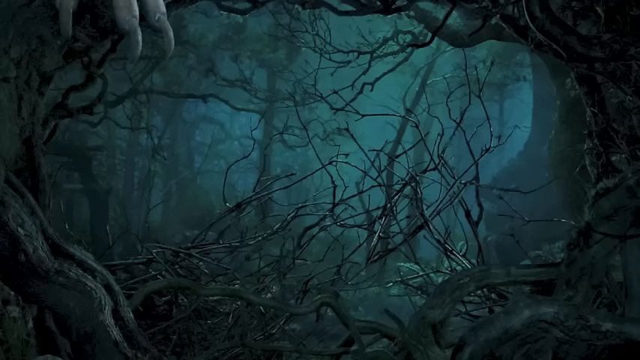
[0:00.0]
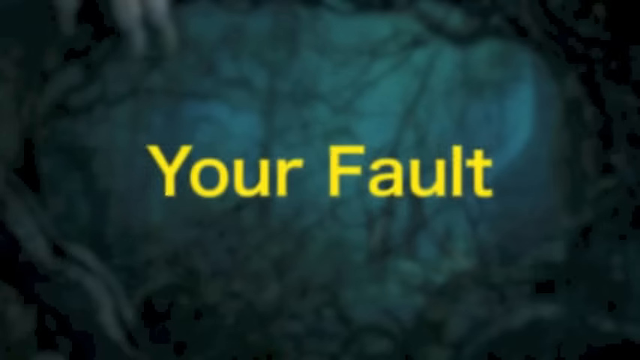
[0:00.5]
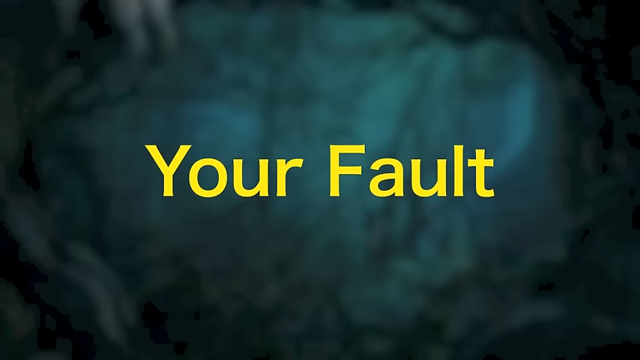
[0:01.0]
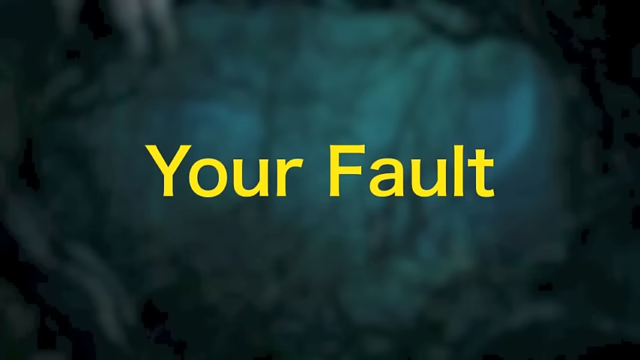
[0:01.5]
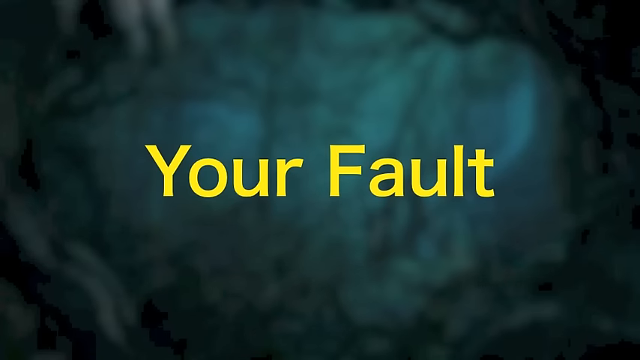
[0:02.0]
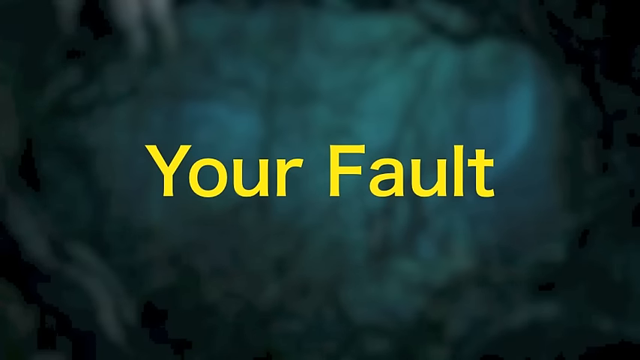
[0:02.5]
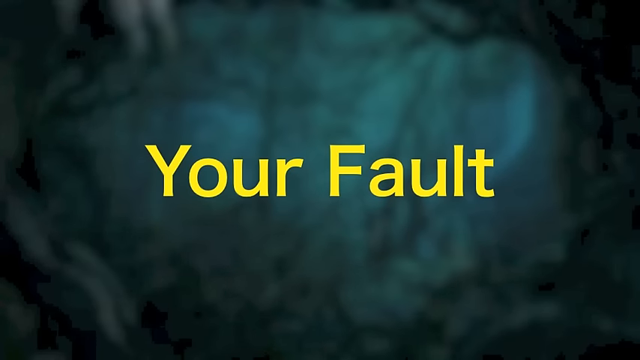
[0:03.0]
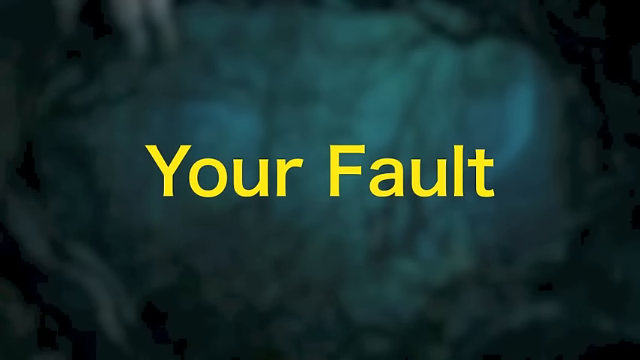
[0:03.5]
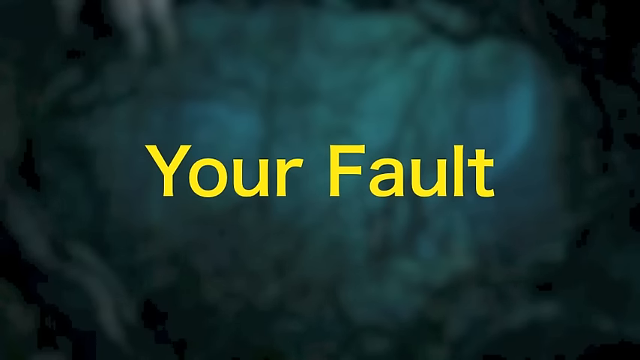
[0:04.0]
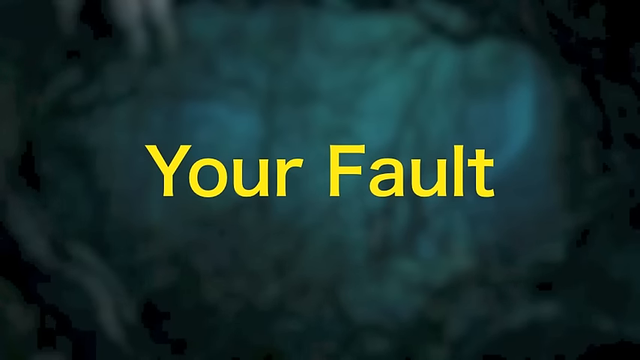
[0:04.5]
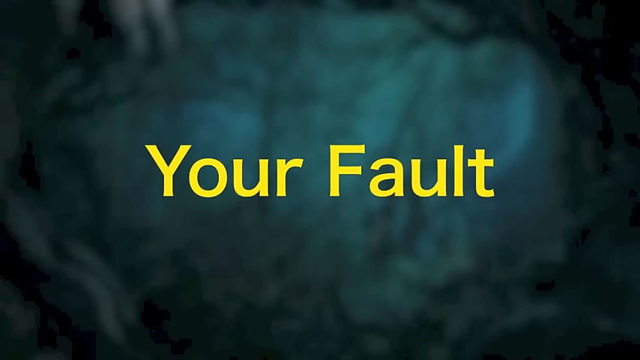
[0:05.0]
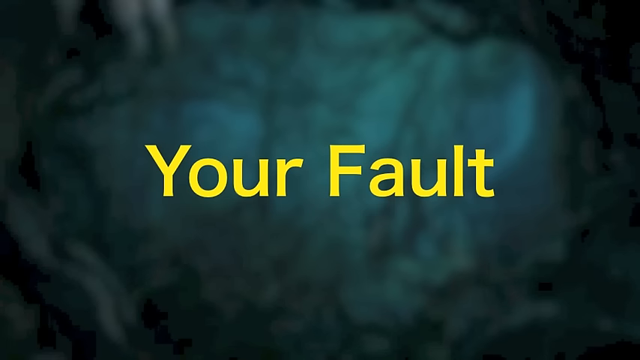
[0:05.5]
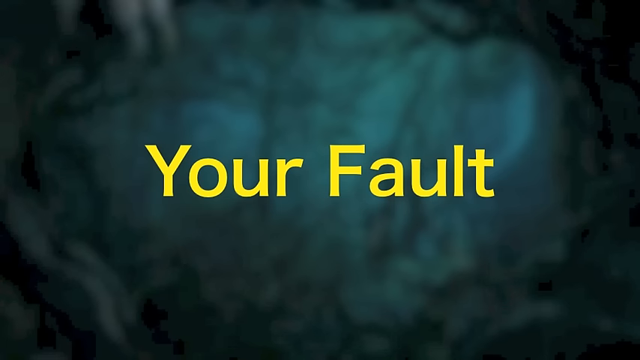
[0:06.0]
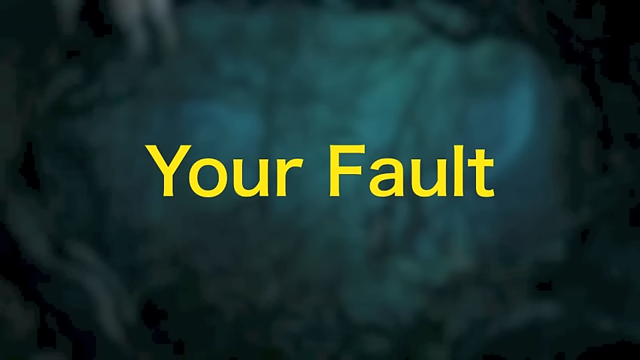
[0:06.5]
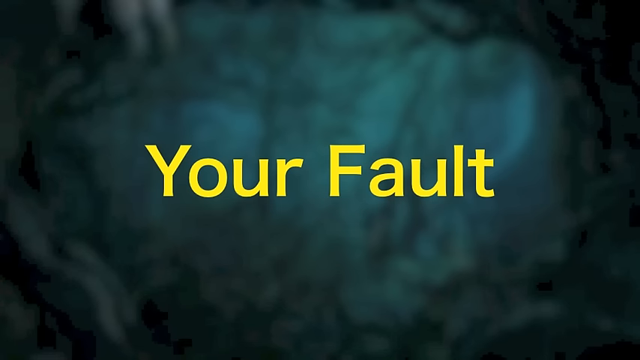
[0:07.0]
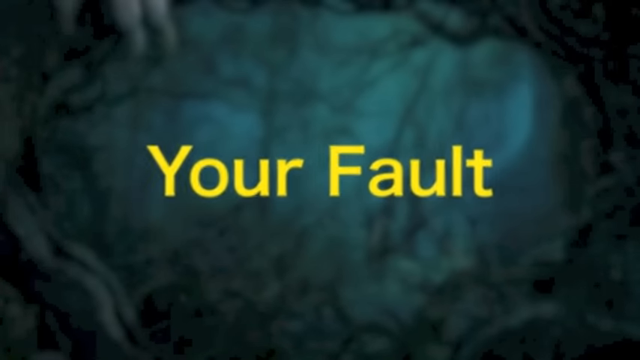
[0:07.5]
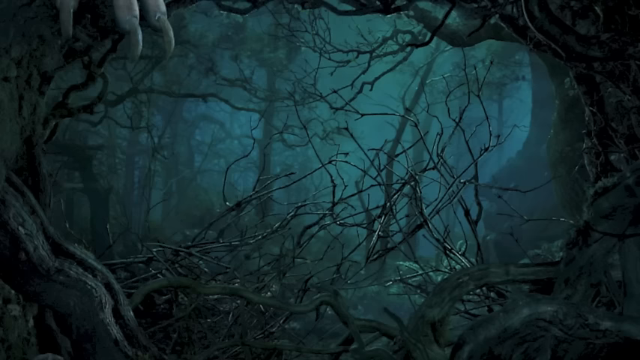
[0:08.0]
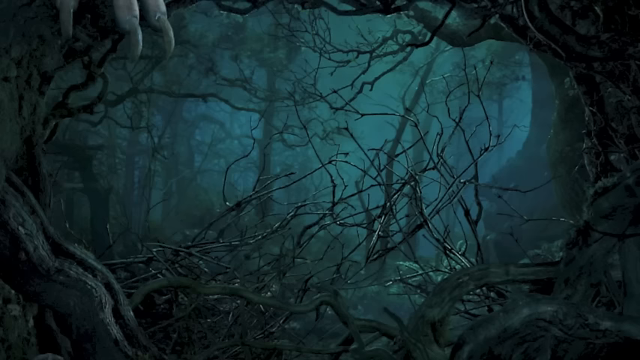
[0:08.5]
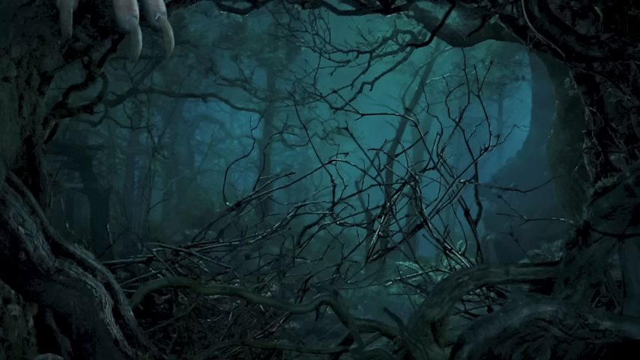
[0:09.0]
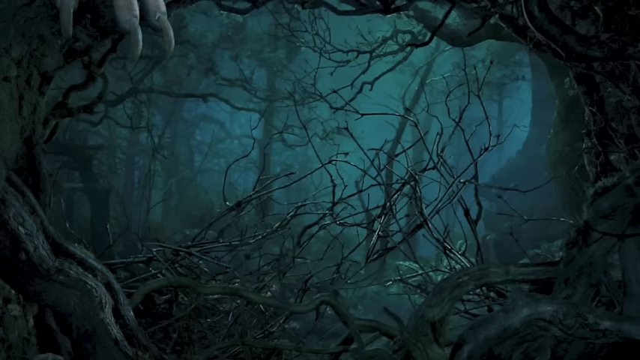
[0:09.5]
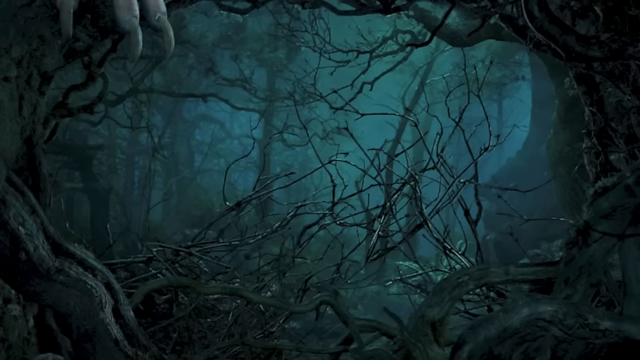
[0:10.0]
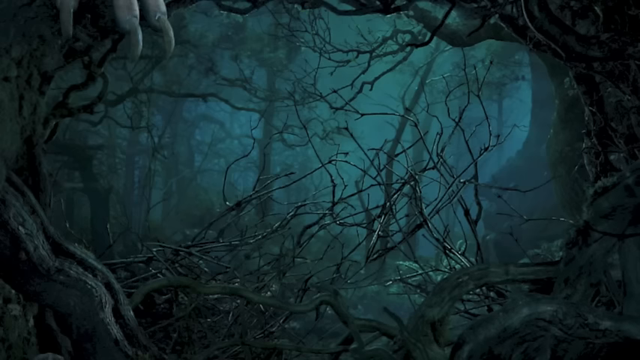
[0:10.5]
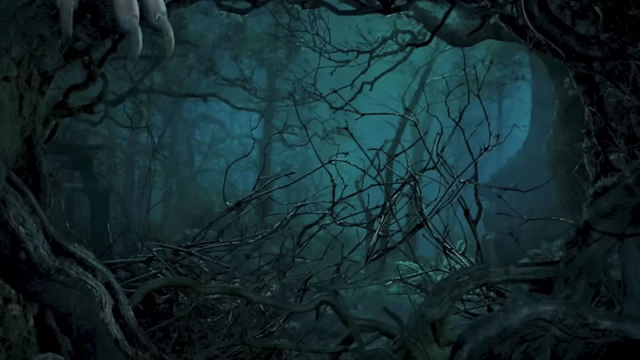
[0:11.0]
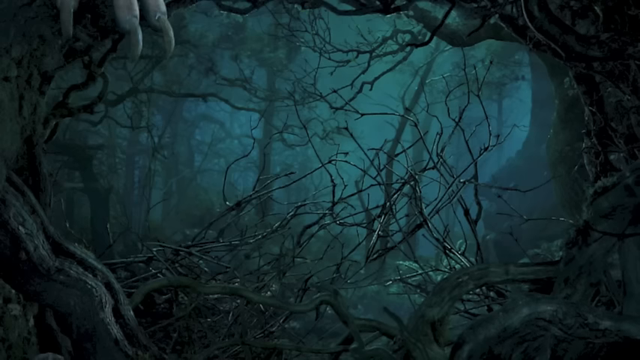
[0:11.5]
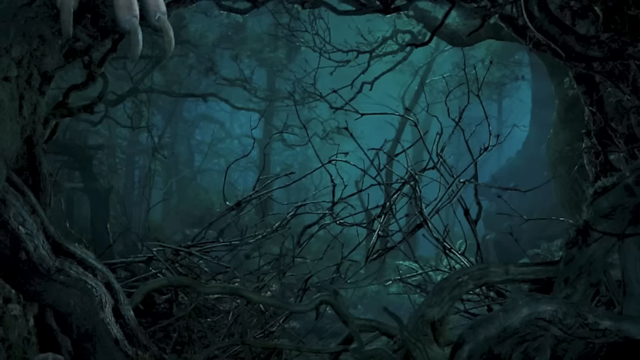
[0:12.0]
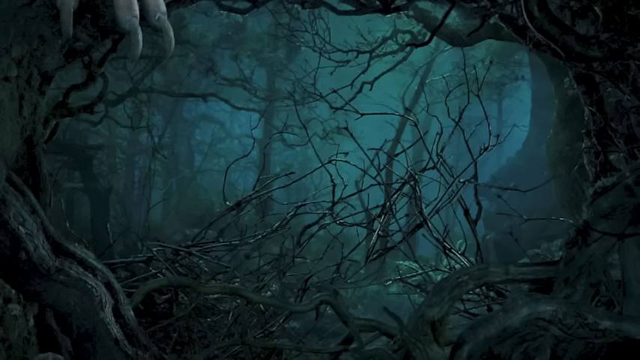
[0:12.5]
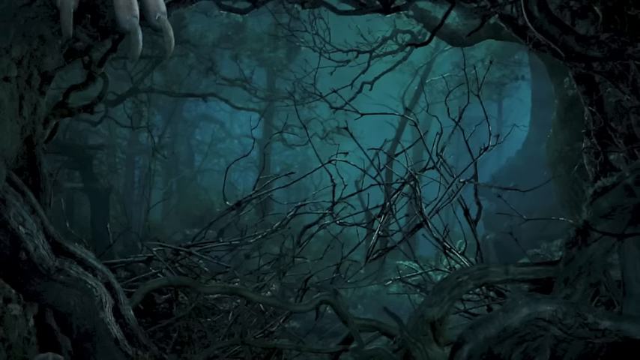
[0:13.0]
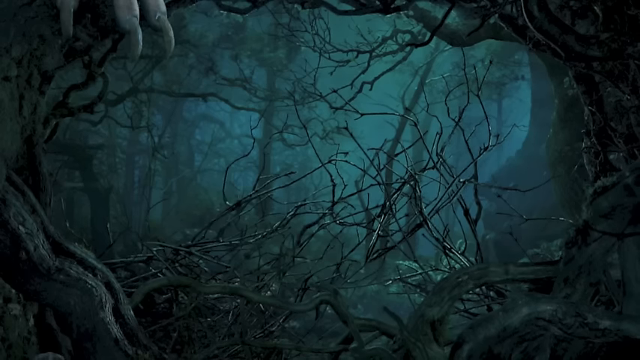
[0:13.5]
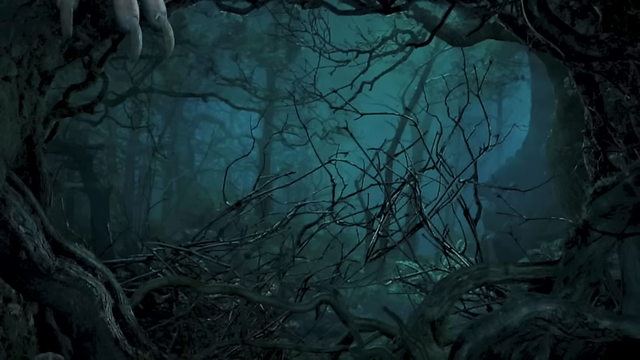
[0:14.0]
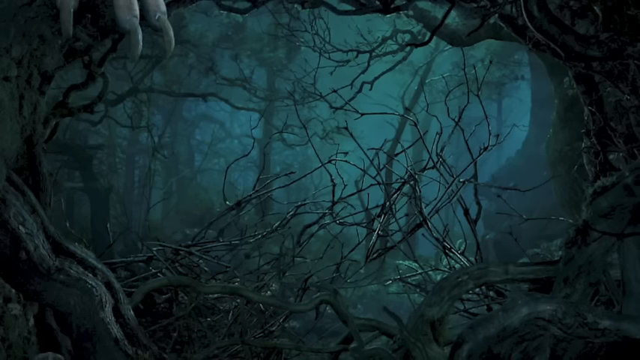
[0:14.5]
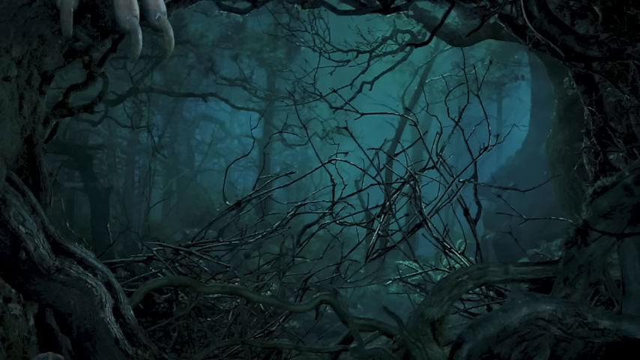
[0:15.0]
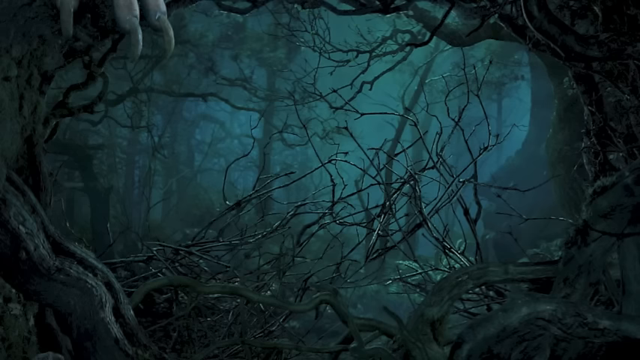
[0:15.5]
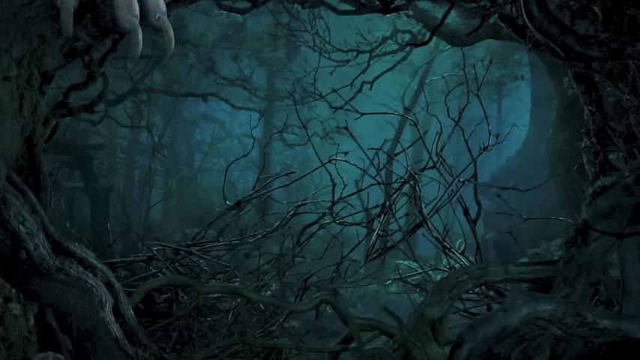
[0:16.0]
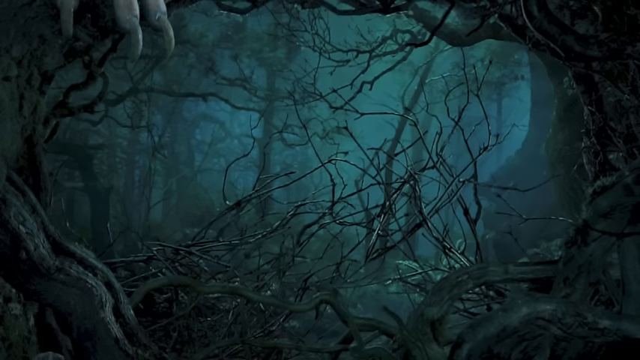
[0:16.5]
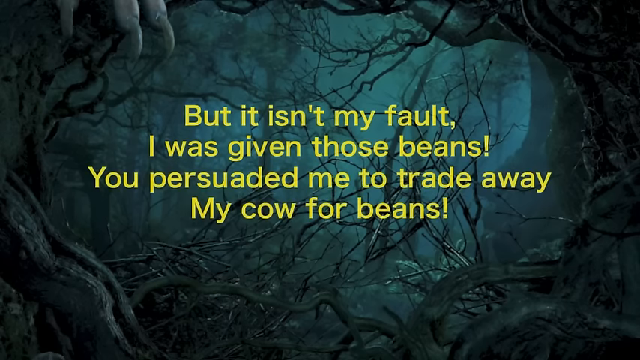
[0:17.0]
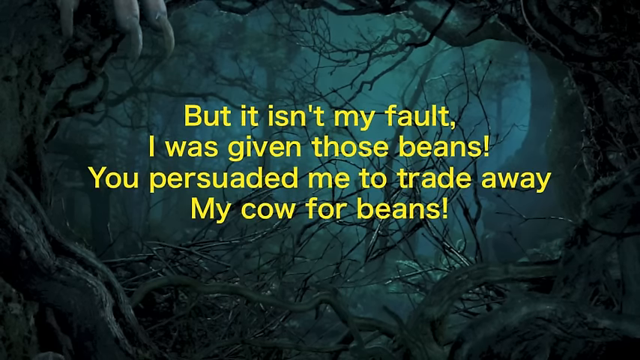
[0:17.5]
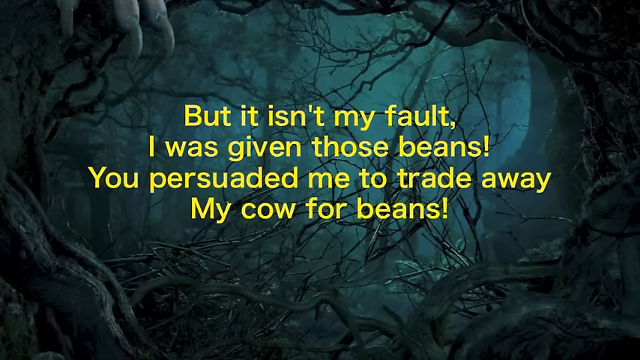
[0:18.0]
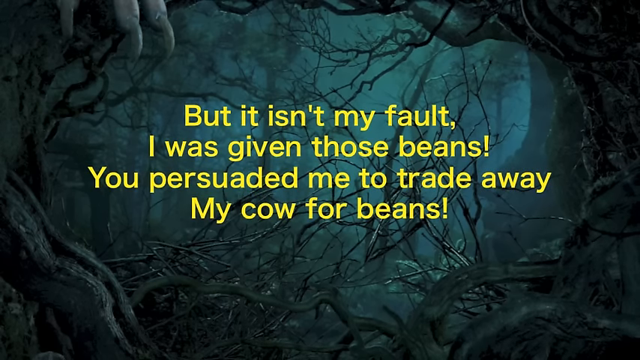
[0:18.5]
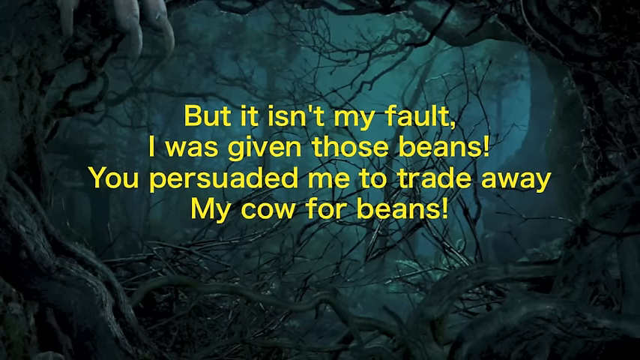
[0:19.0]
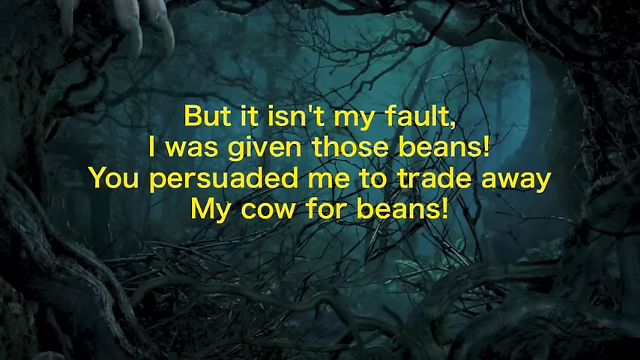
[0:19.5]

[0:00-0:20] The video opens on a title screen with yellow text over a blurred background. Large letters read "Your fault." The background is an image of a forest; the time of day is unclear, but the forest is rather dark, with some blue light shining through the branches, the trees and the many roots. In the upper left-hand corner is what appears to be some sort of creature, cut off so it is hard to tell, with perhaps three of its fingers visible. Each finger has an extremely large beige claw, as if the creature is perched on a branch of the tree that is cut off and out of view. The scenery does not change or move; it is a static image of a forest, possibly a real photo that has been edited, a generated image or an artistic creation. Toward the end, additional smaller text in the same font and color appears, reading "But it isn't my fault. I was given those beans. You persuaded me to trade away my cow for beans."